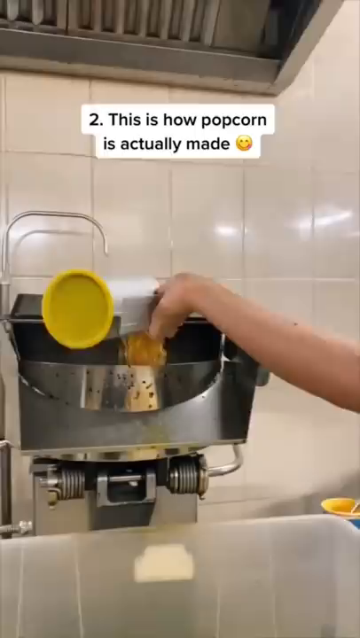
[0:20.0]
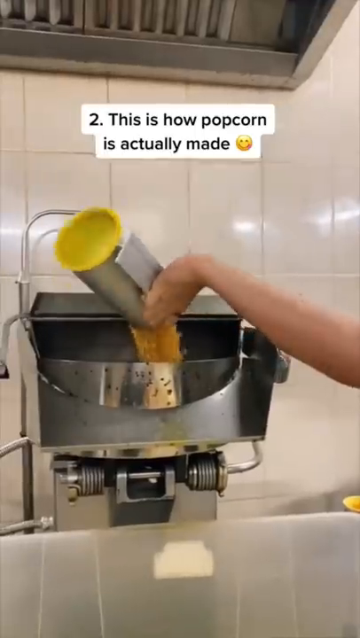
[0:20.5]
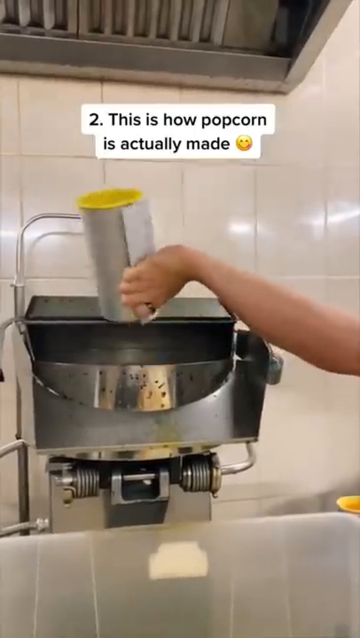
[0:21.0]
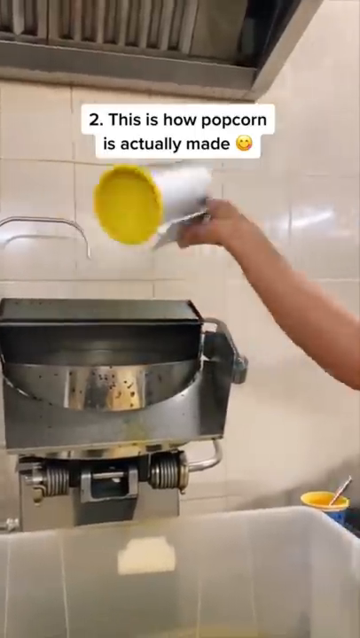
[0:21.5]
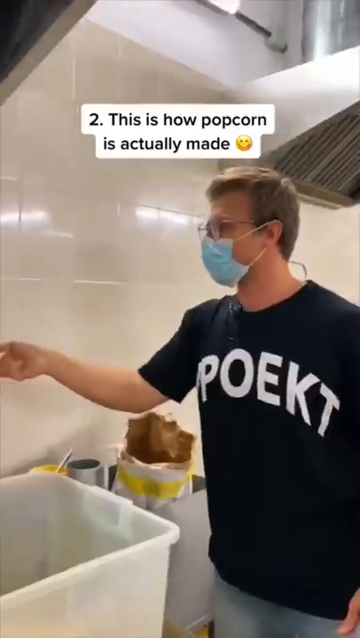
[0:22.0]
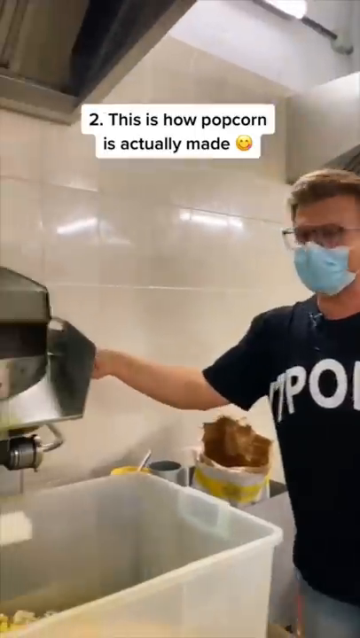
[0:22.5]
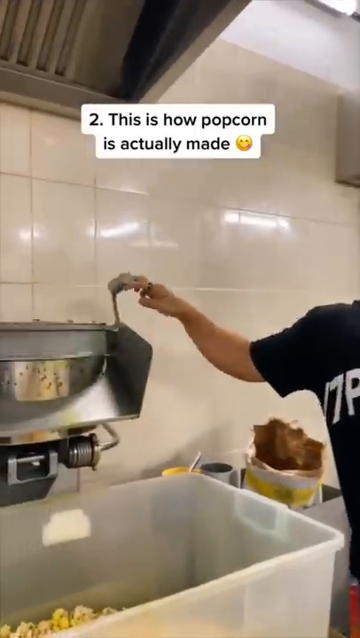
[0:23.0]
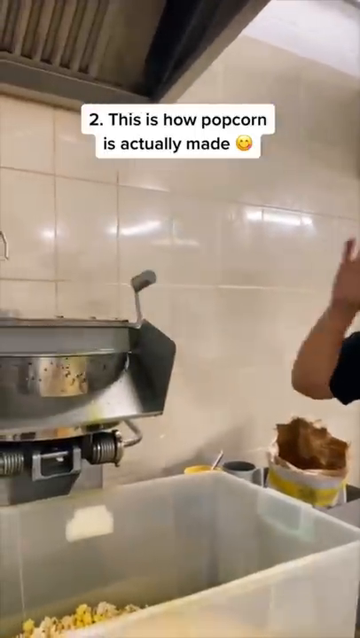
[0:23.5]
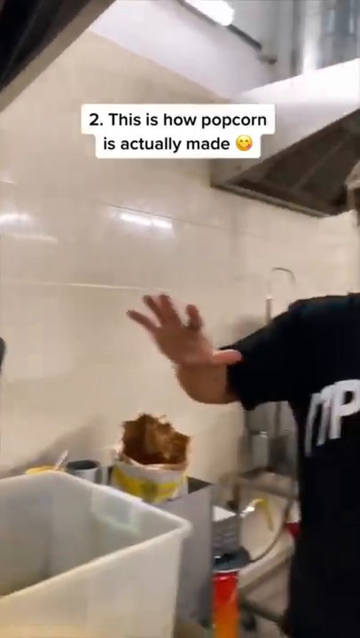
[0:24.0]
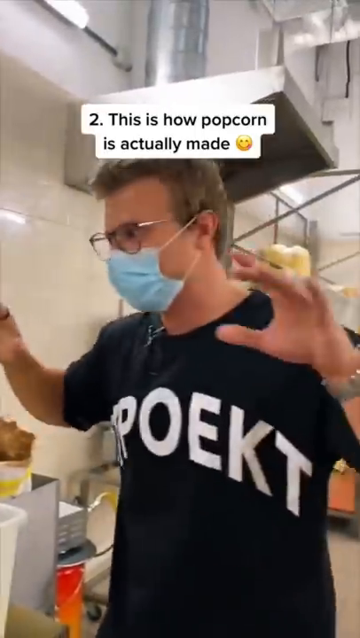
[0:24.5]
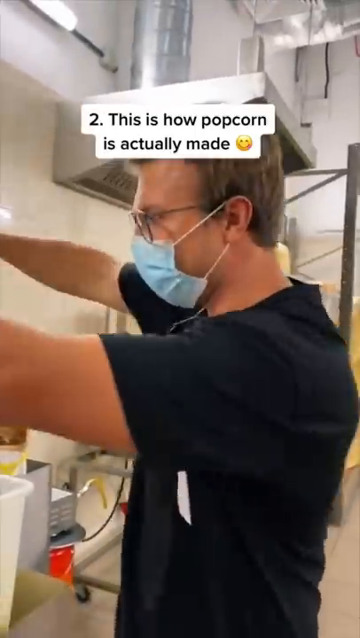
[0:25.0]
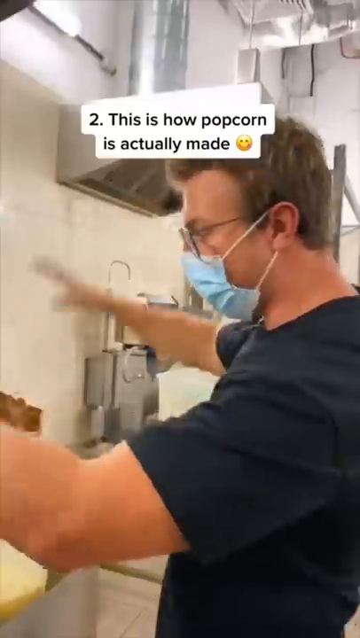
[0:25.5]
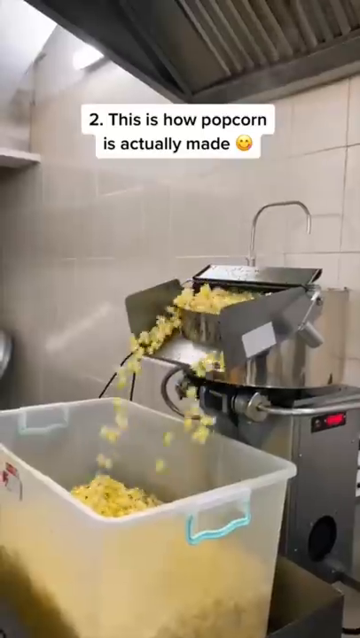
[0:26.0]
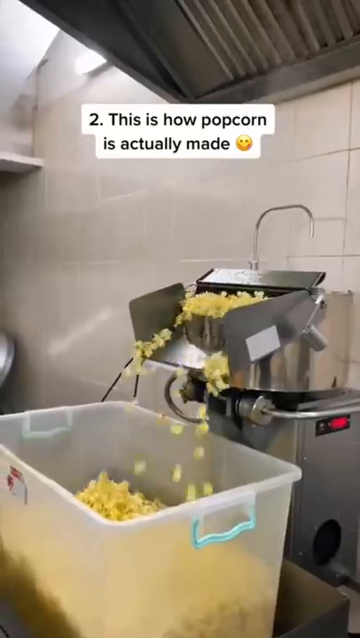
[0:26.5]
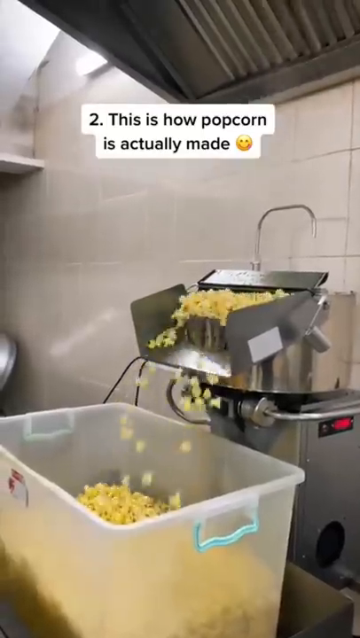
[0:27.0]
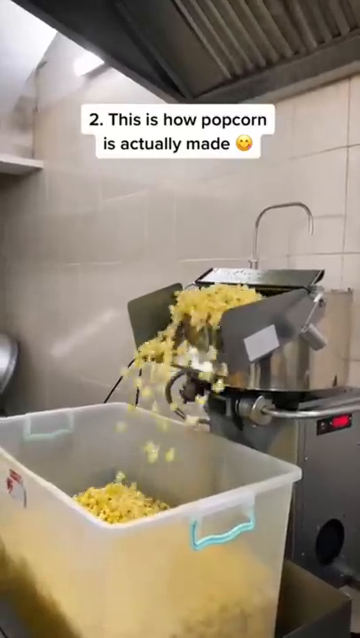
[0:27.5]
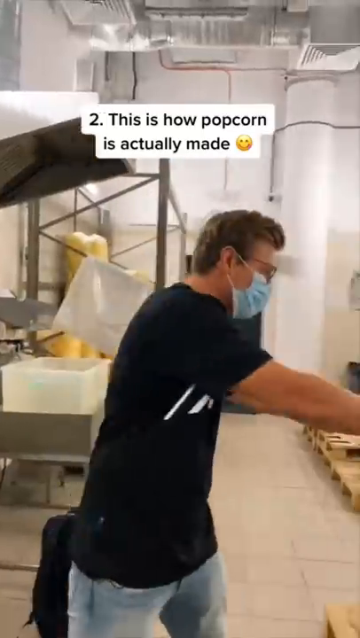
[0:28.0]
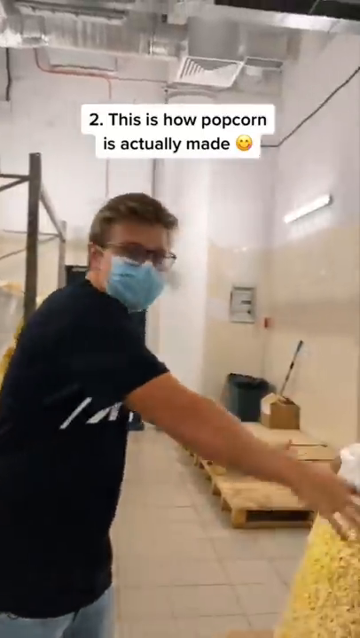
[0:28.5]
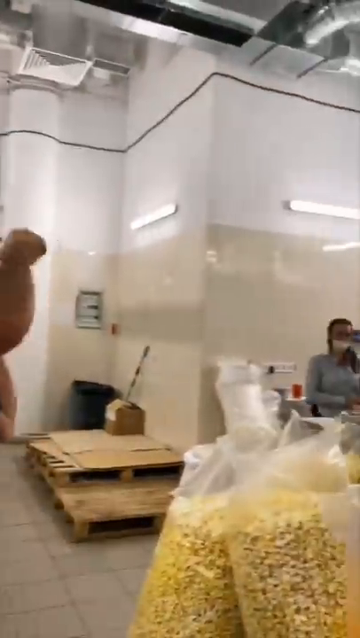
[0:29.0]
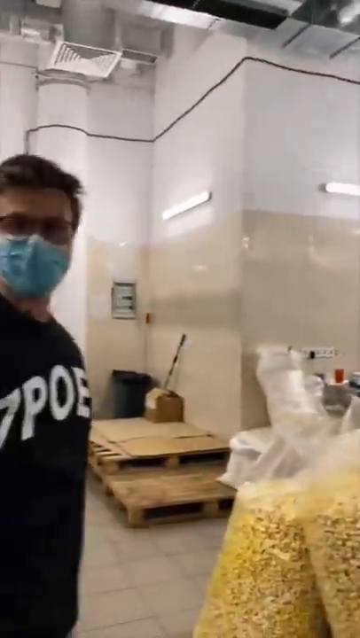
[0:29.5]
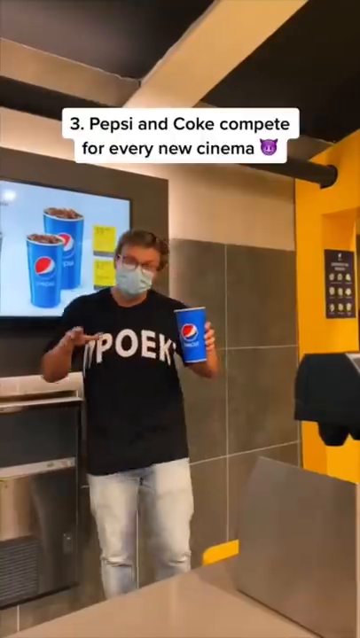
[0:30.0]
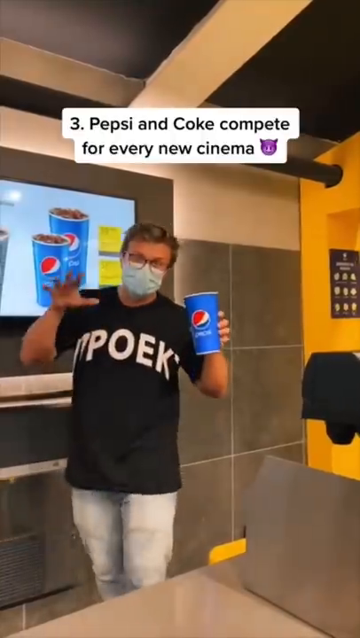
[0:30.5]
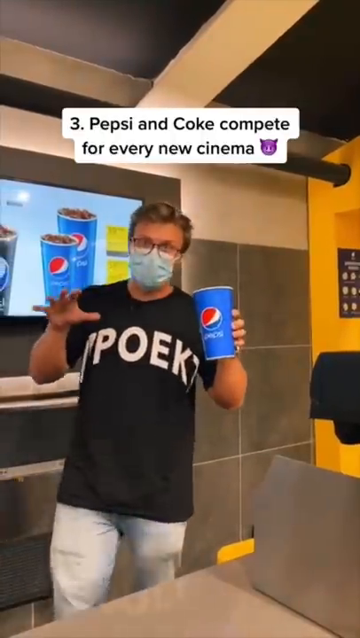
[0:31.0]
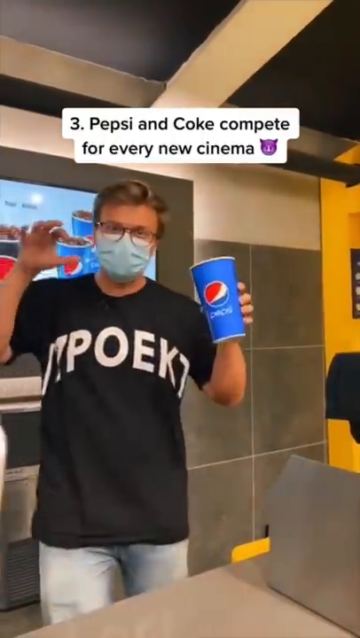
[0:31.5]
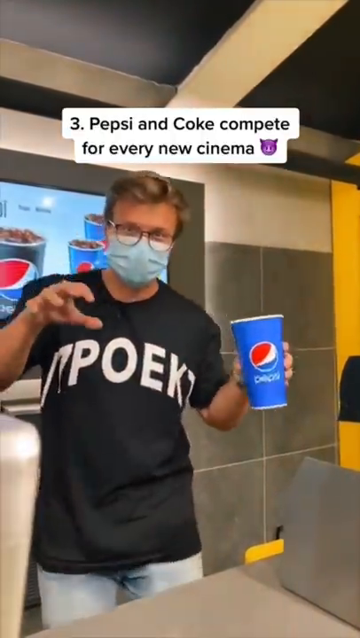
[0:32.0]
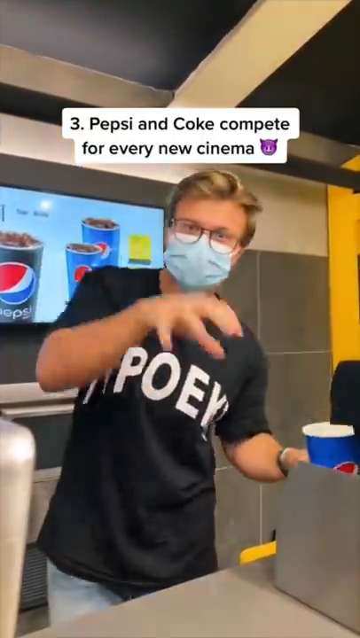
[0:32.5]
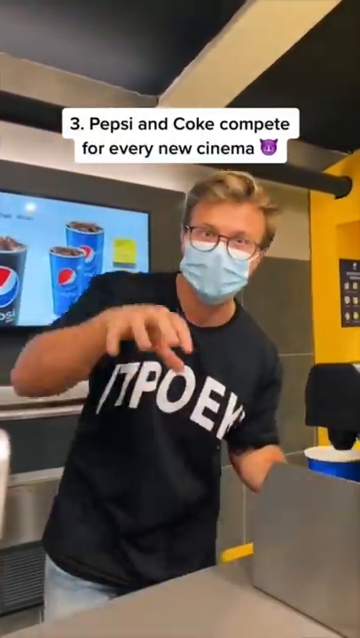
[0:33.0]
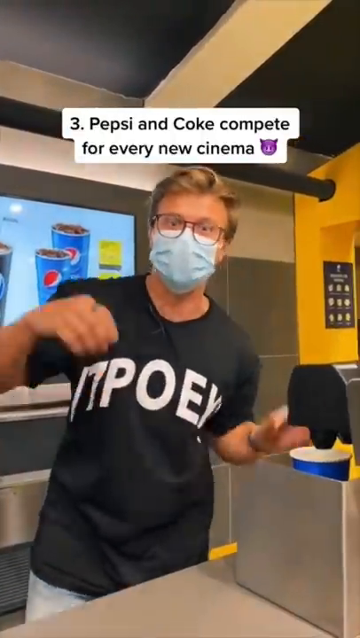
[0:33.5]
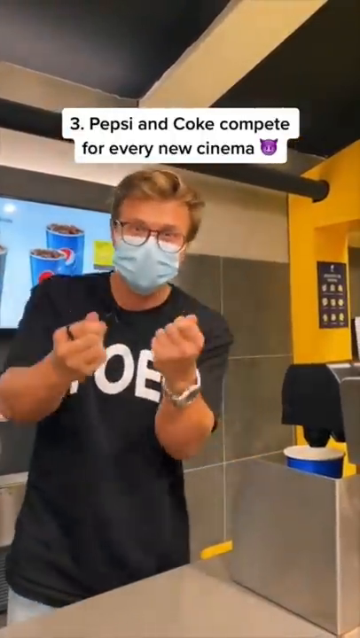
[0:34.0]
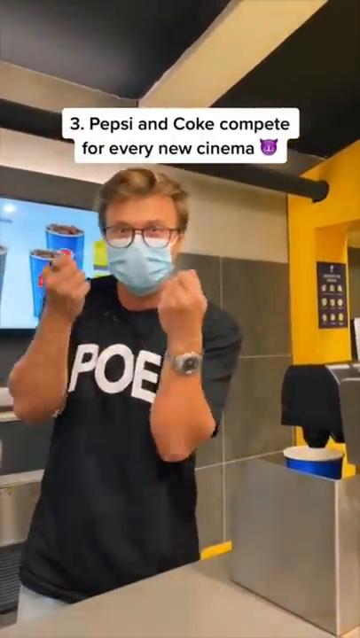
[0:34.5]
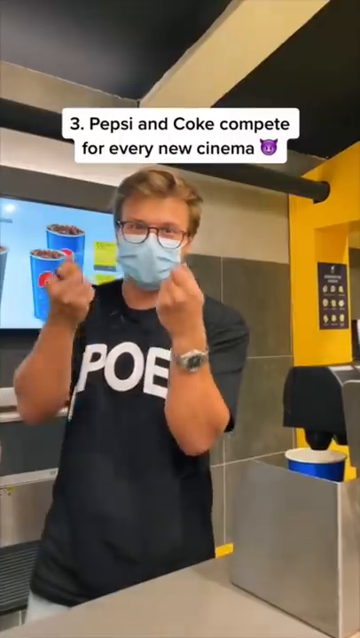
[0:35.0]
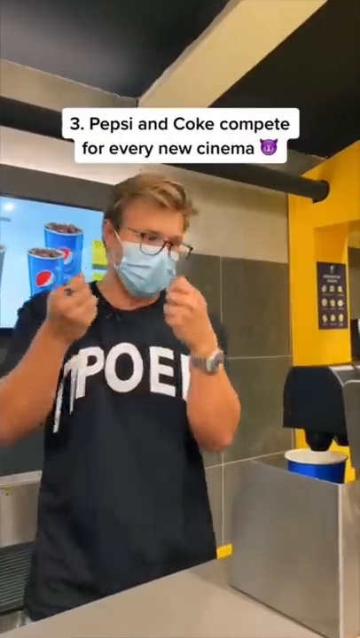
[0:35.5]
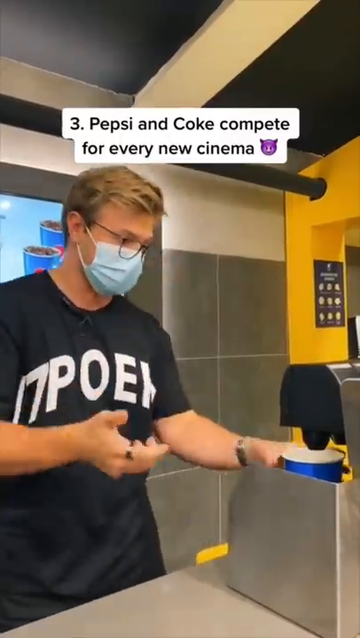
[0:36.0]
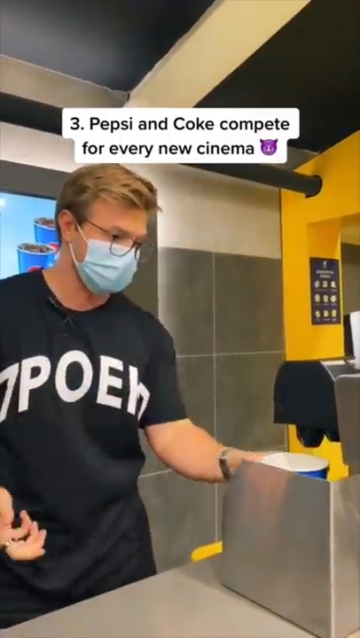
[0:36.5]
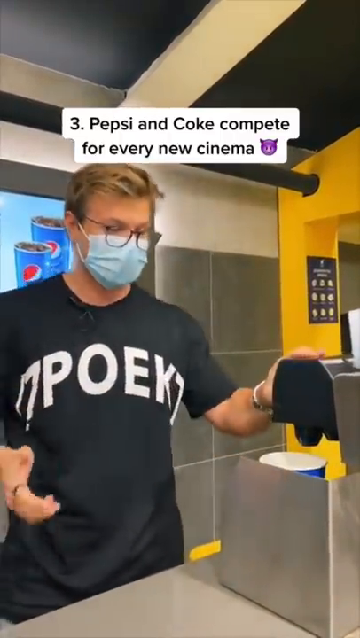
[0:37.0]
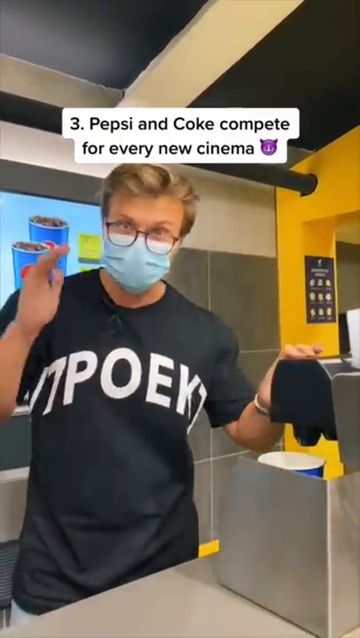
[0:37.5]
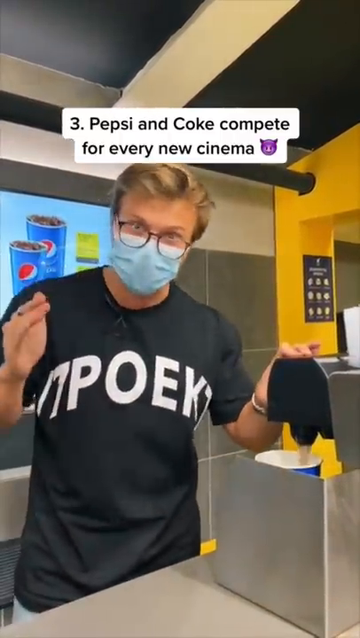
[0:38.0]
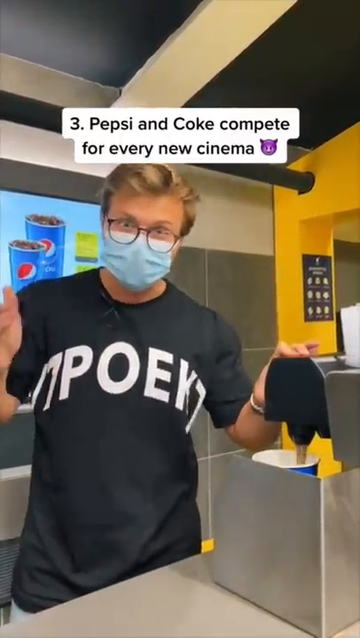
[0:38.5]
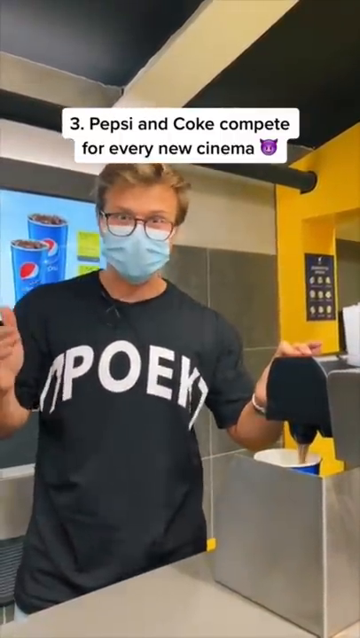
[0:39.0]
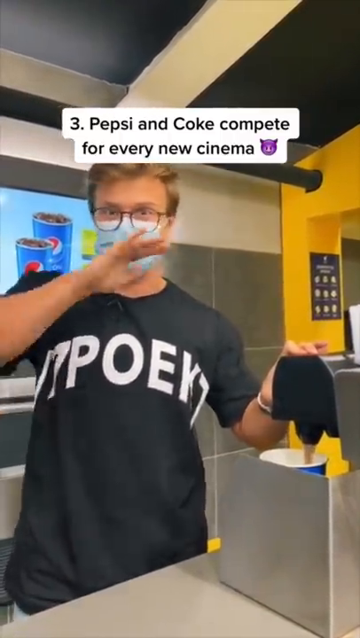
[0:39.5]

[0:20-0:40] In the back at the popcorn machine, the man dumps the popcorn into a big giant tub, larger than a storage tub for Christmas decorations. Giant, human-sized bags full of popcorn, twisted at the top, are on the floor, probably at least 10 of them. The back is an industrial setup that looks like a factory. On-screen text says "three Pepsi and Coke compete for every cinema." The man walks from the back up to the counter where customers order, the front area where most of the video takes place.